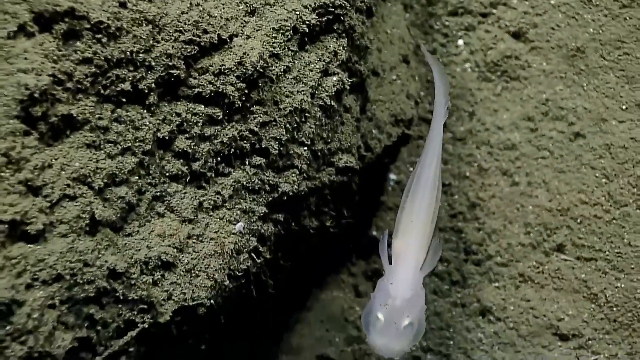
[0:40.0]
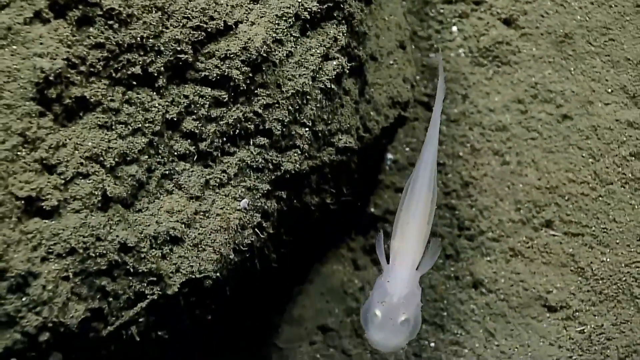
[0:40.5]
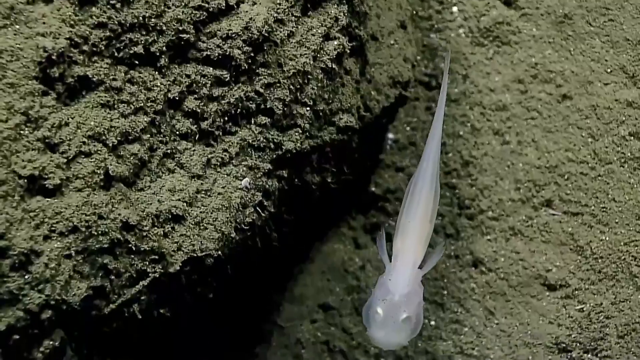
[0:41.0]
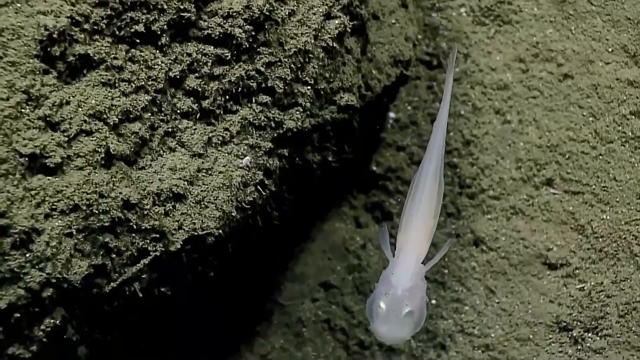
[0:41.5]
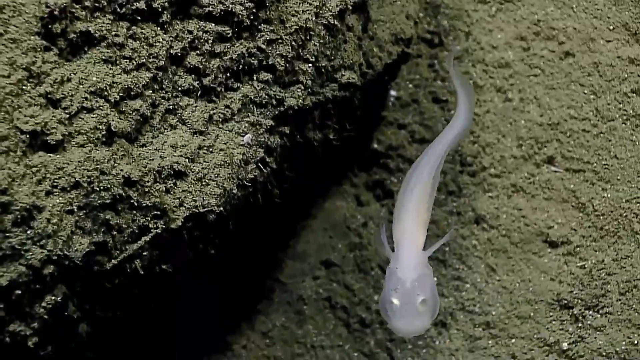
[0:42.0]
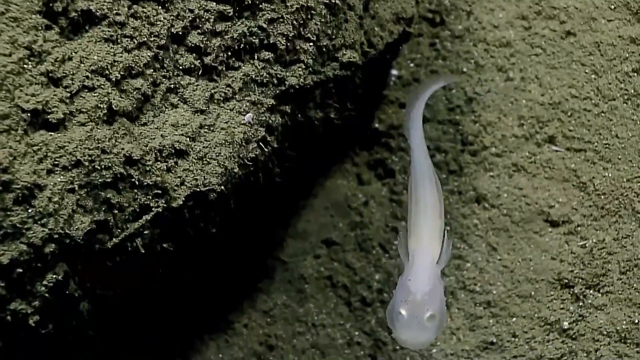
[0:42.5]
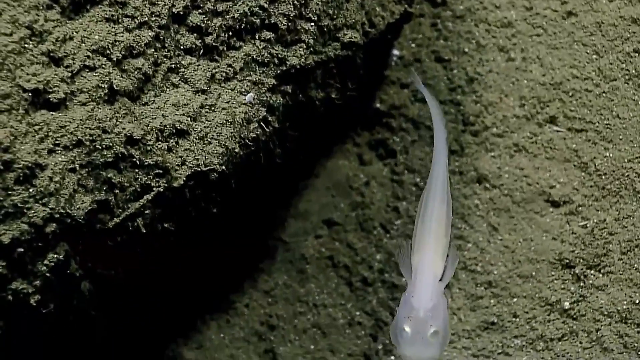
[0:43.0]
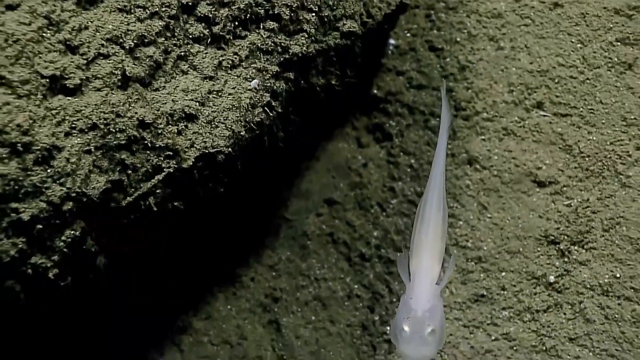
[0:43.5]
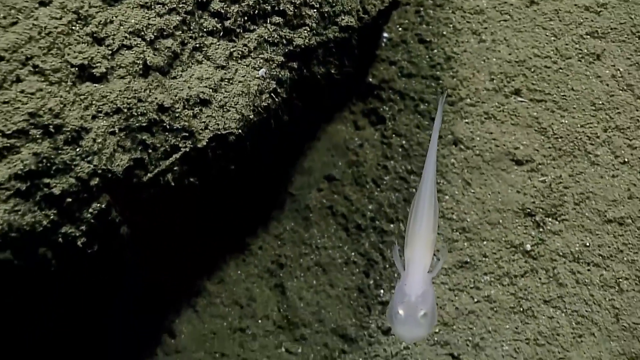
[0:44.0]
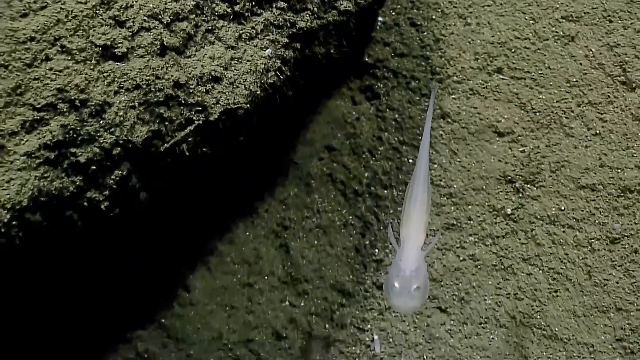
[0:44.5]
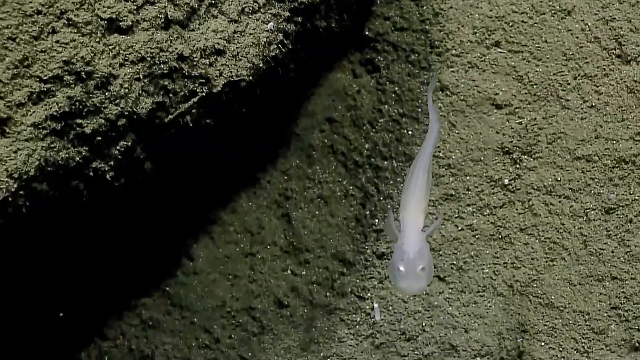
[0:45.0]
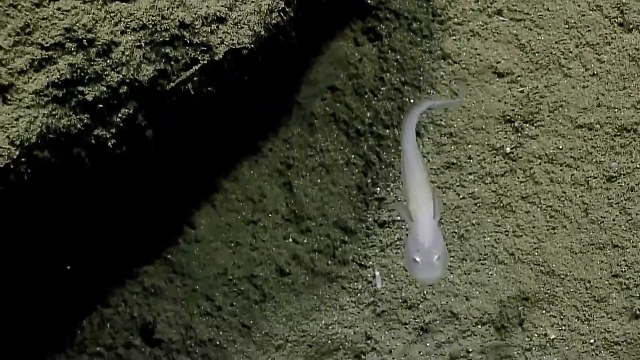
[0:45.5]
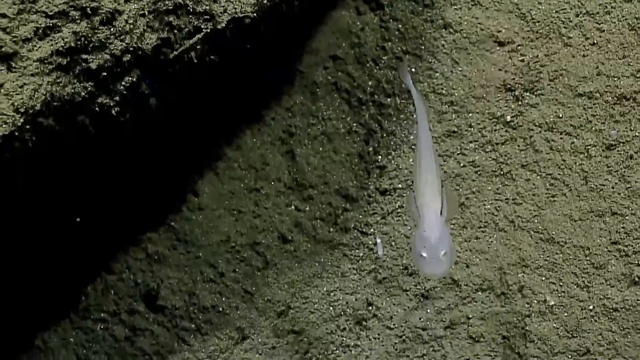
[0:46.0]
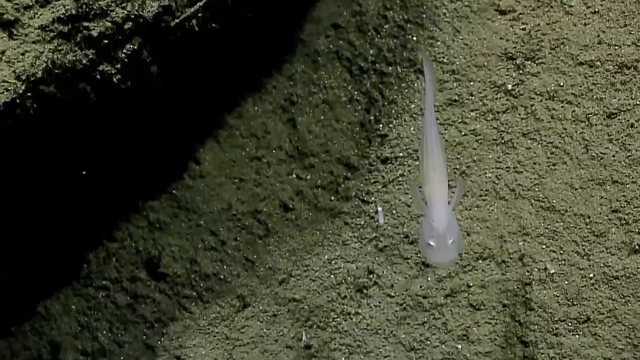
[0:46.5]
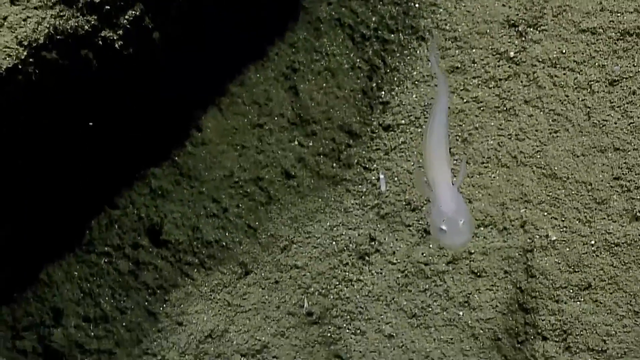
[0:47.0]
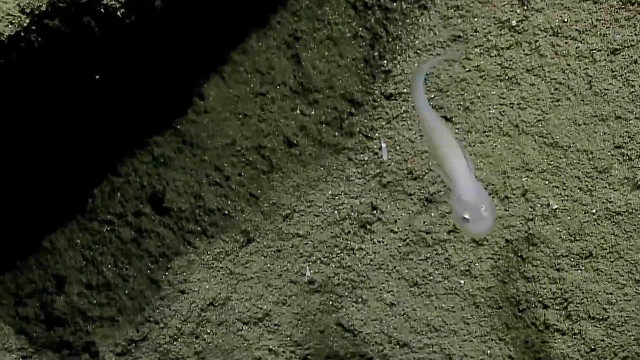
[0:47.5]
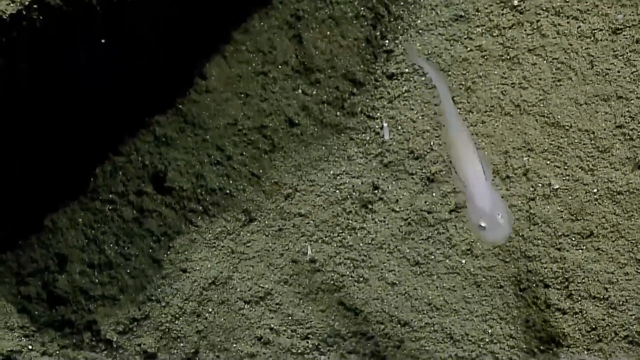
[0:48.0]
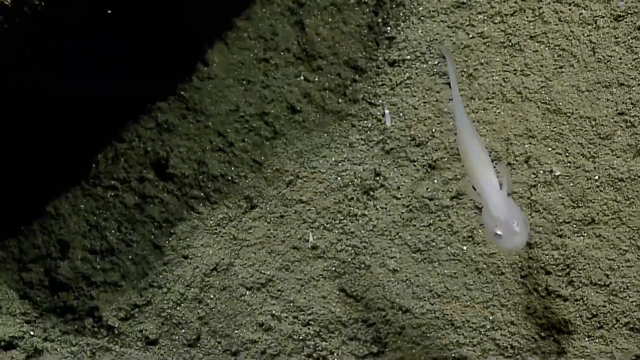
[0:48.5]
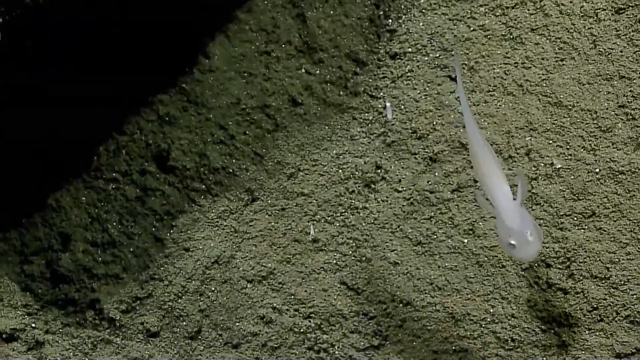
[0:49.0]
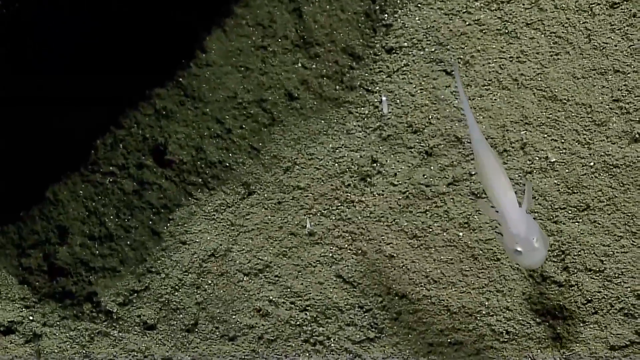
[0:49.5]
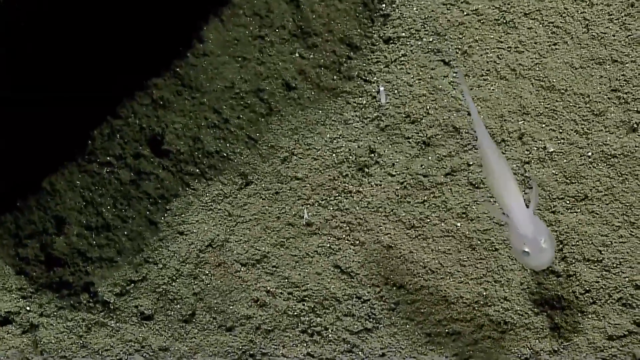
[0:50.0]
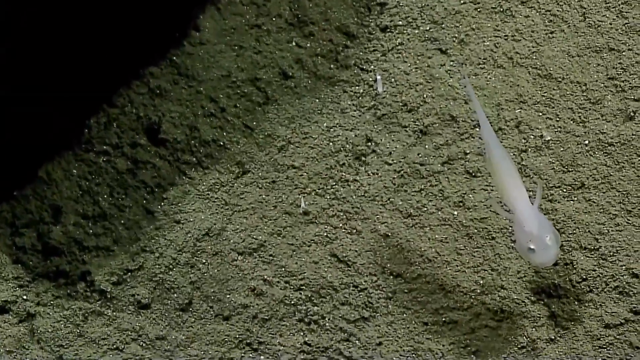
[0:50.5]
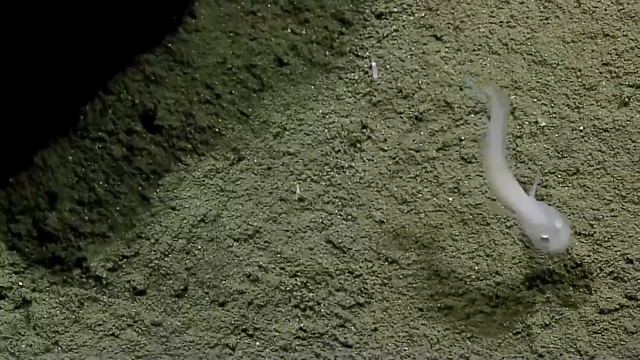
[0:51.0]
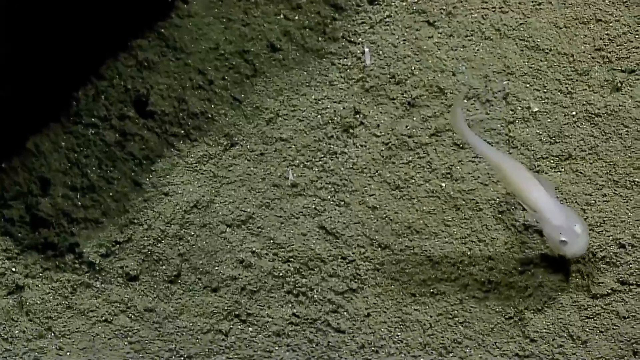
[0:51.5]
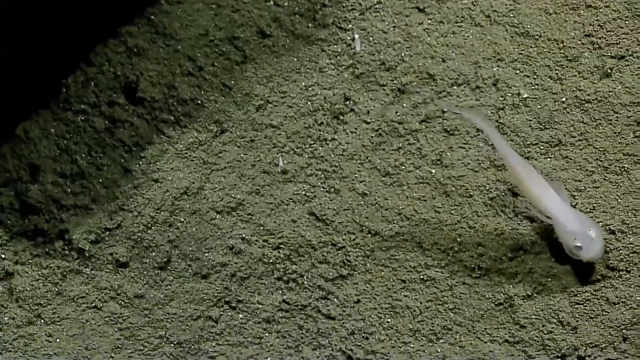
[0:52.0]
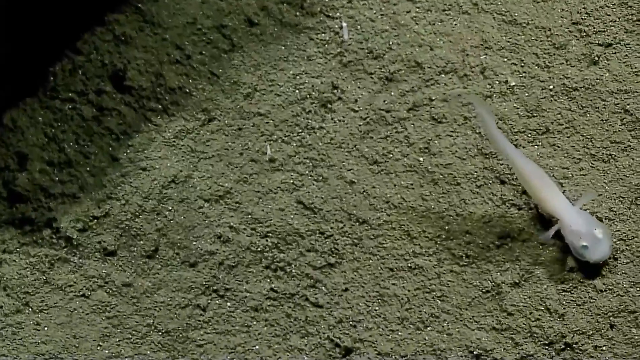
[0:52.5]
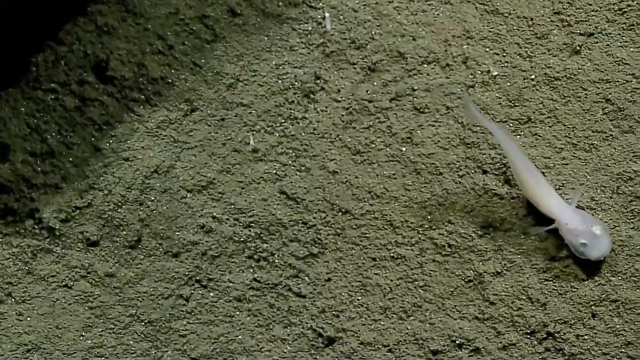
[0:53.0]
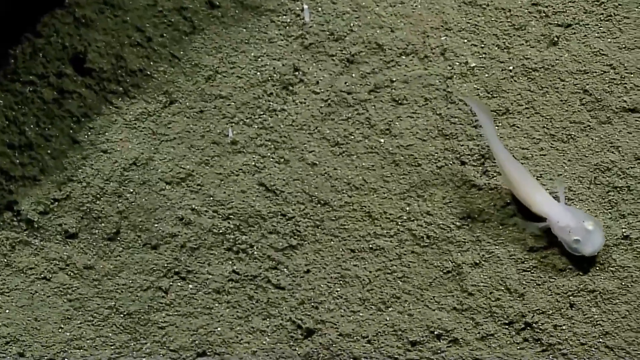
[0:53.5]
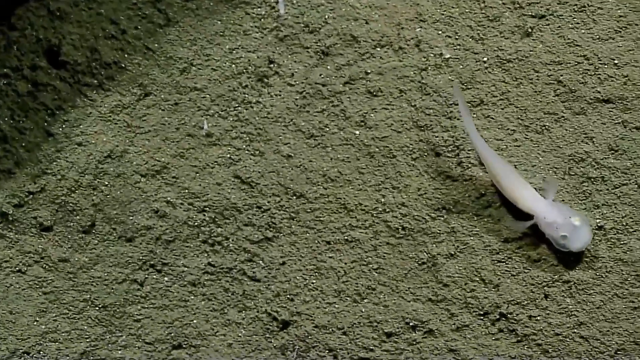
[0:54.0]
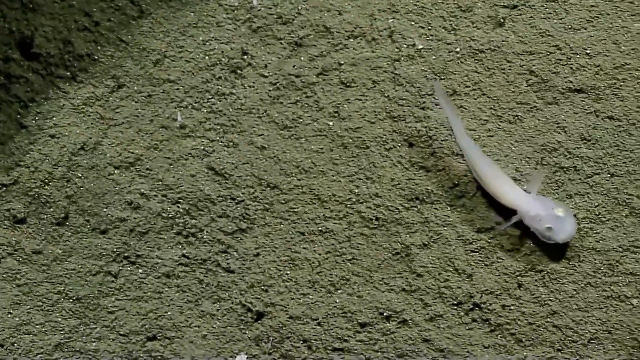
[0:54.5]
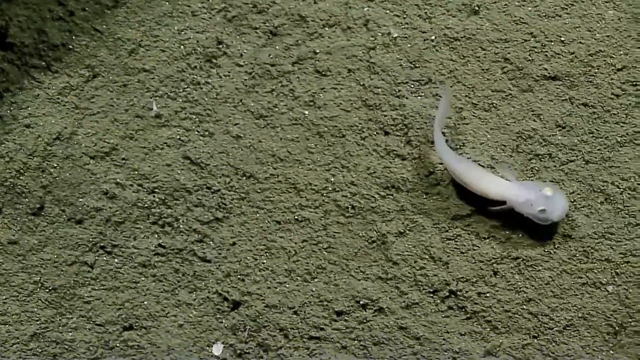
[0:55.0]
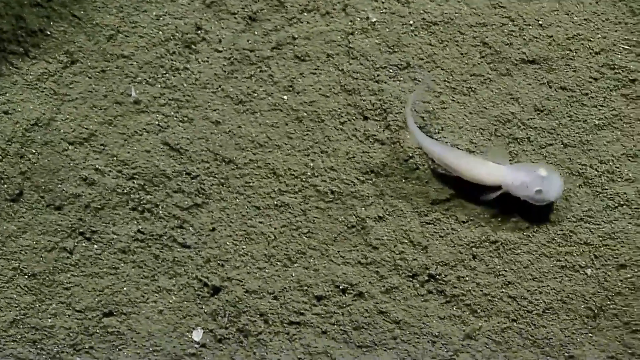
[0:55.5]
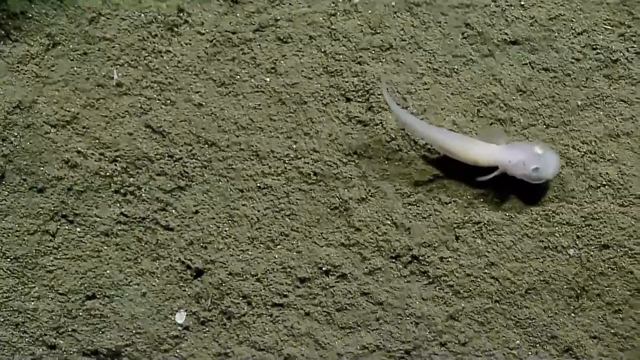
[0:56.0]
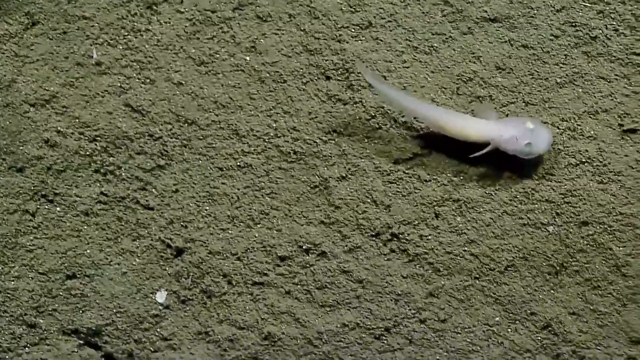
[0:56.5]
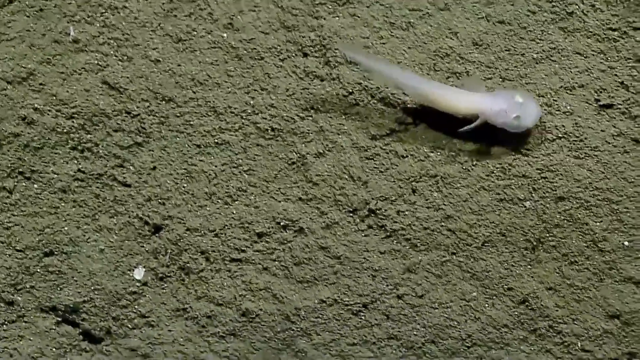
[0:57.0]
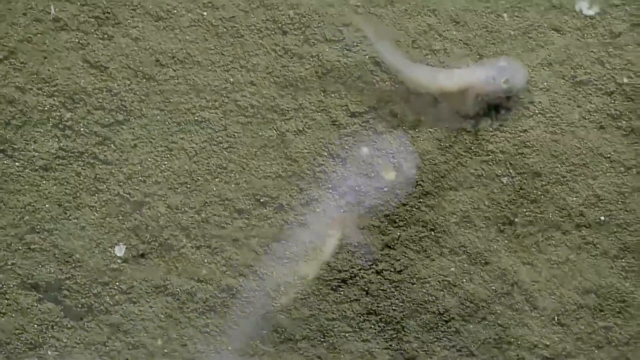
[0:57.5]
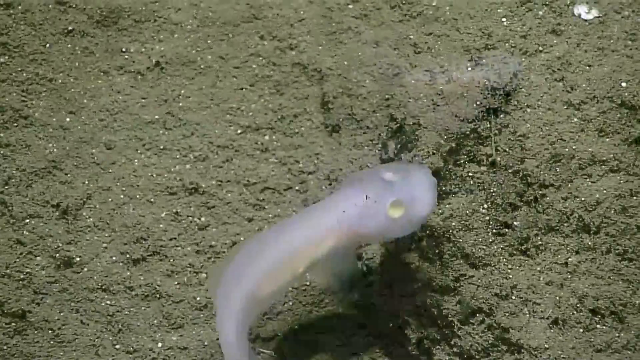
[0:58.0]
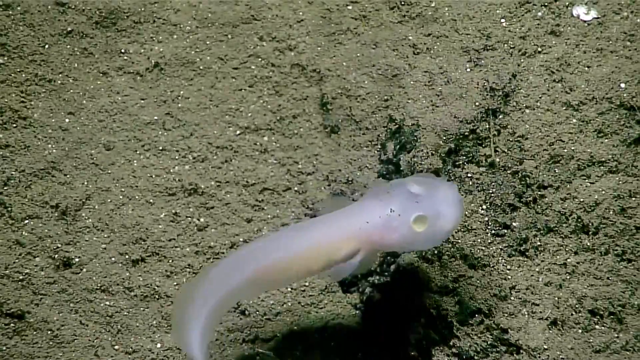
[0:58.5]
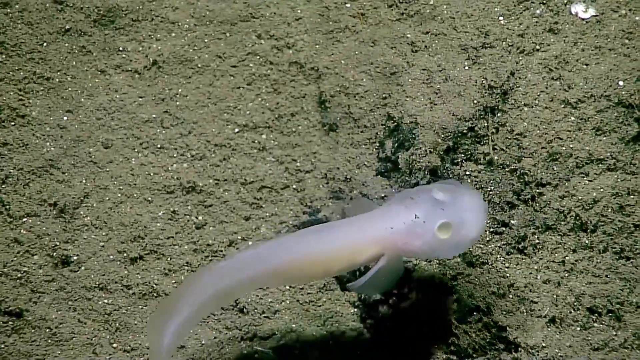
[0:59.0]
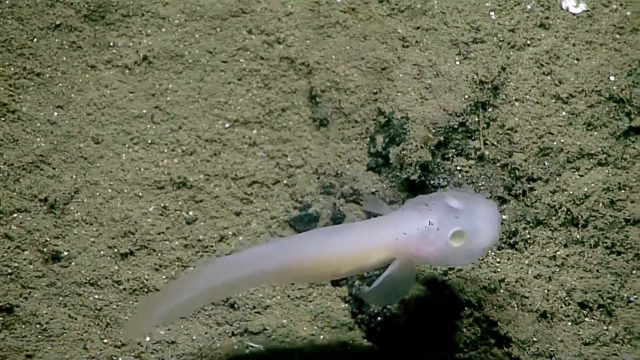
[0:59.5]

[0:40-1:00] The delicate, white, almost translucent sea creature swims next to a brown outcropping with an almost sponge-like texture at the bottom of the Mariana Trench, deep in the ocean. Crevices and dark shadows appear as the elevation slightly changes, and the Aphyonidae SP begins to slowly undulate its body to move and change directions. The shadow of its body is visible on the floor below it, while other small sea life swims and floats in the water around it. There is almost a red reflection in the water next to it. As the creature gets closer to the seafloor, its shadow grows larger and, due to the light source, almost seems to reflect pink on the seafloor. White or gold flecks are visible in the dirt and sediment along the seafloor.